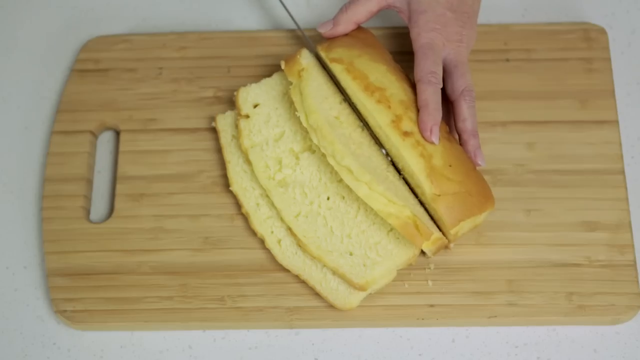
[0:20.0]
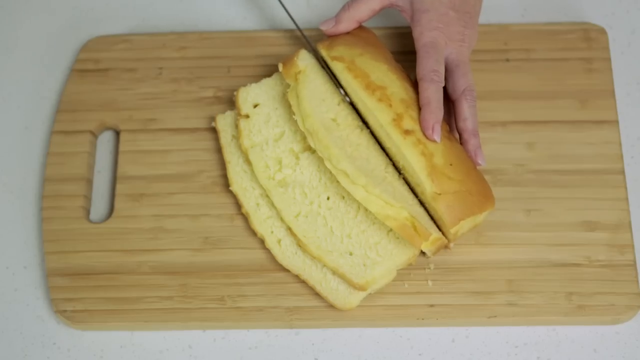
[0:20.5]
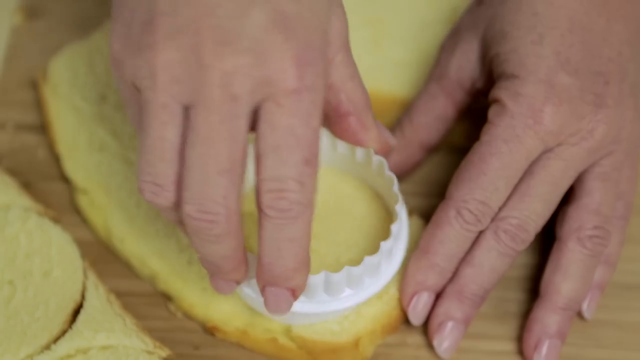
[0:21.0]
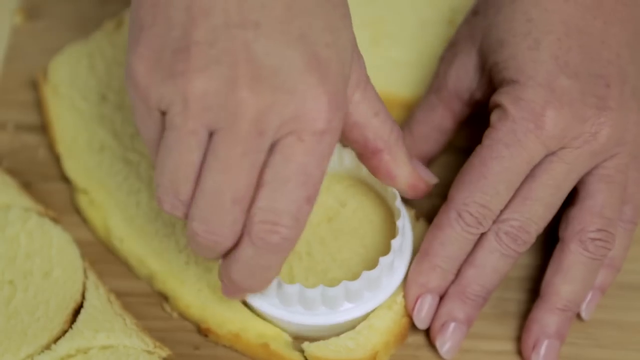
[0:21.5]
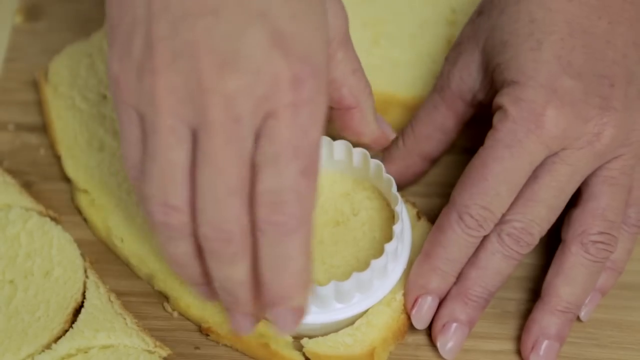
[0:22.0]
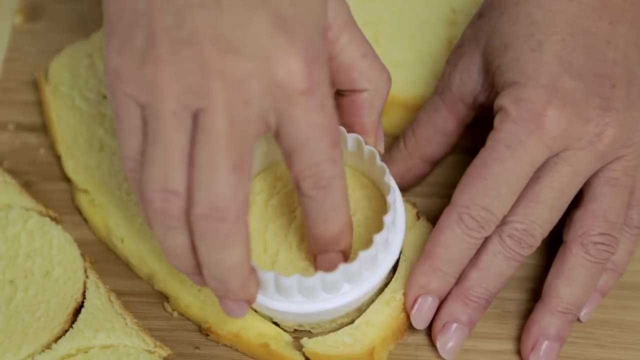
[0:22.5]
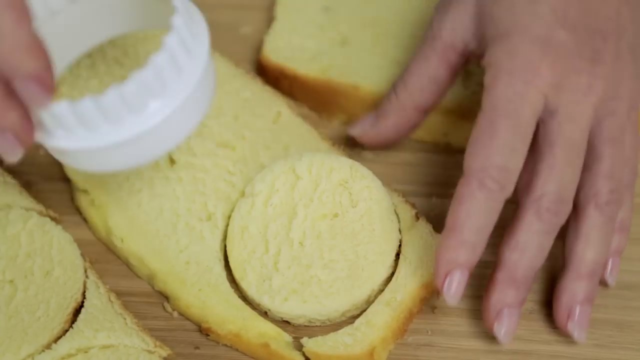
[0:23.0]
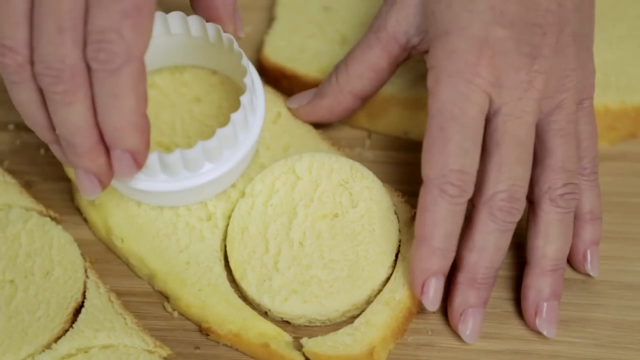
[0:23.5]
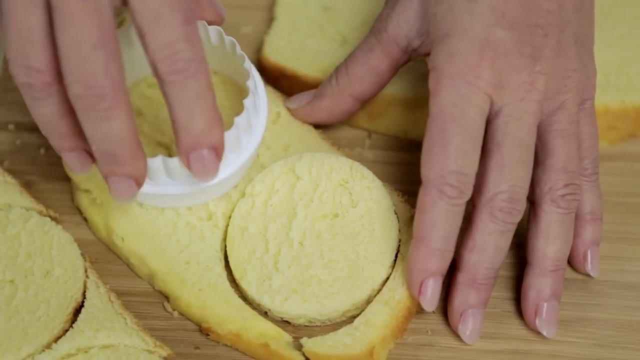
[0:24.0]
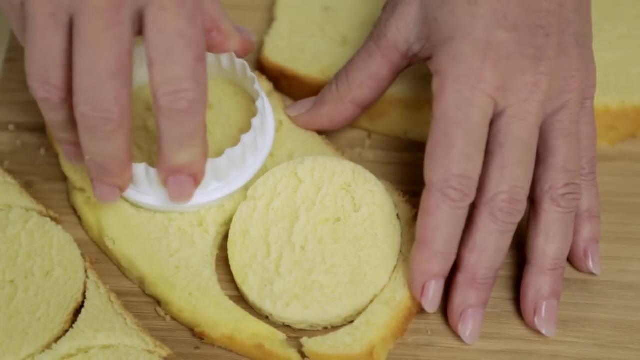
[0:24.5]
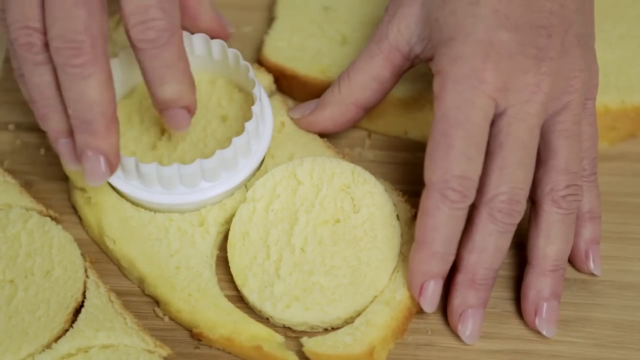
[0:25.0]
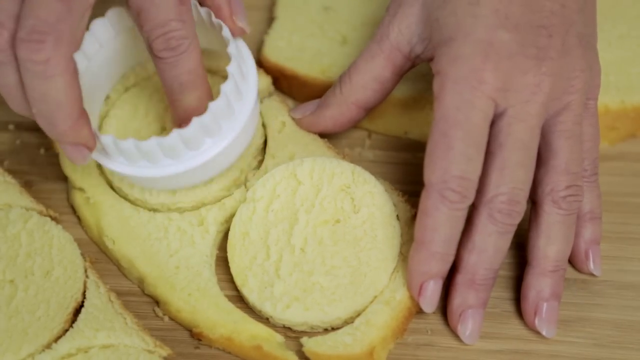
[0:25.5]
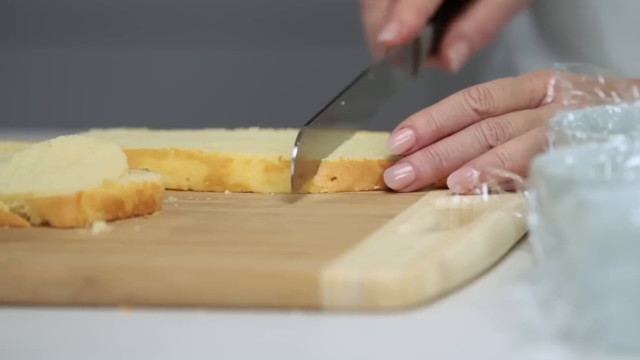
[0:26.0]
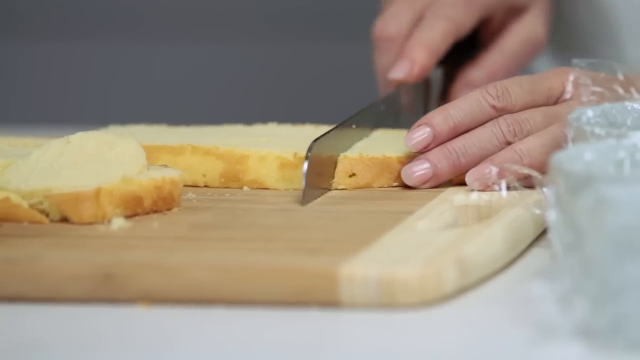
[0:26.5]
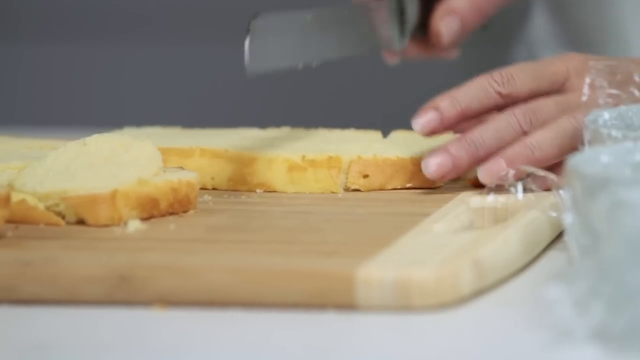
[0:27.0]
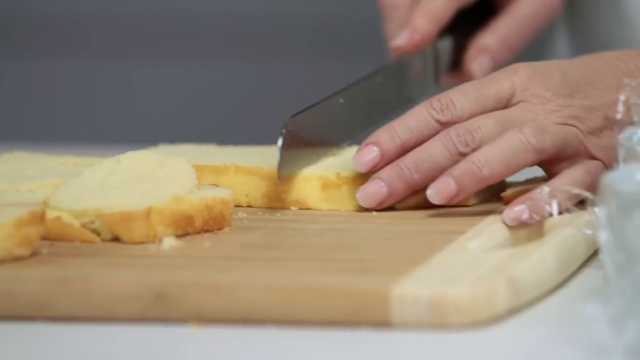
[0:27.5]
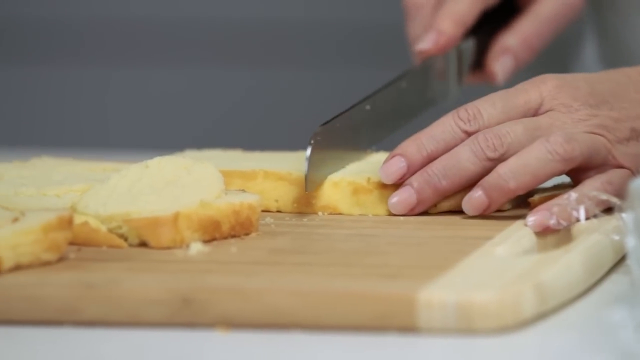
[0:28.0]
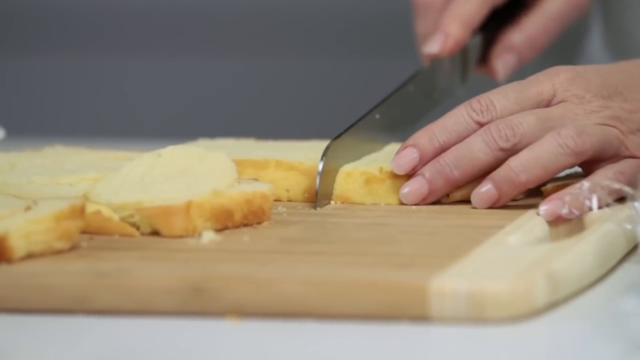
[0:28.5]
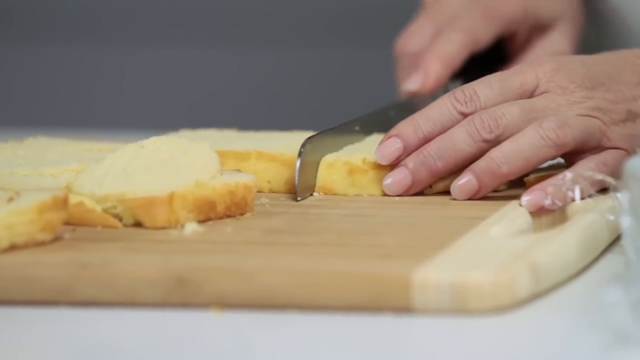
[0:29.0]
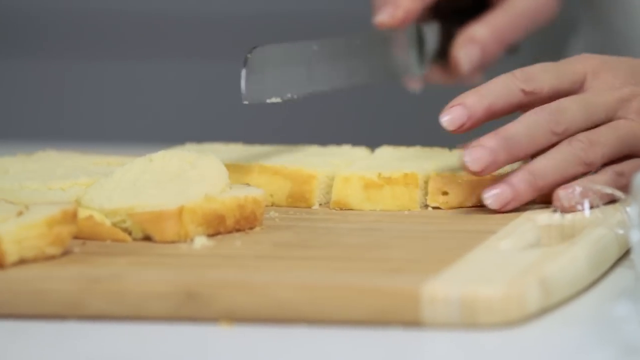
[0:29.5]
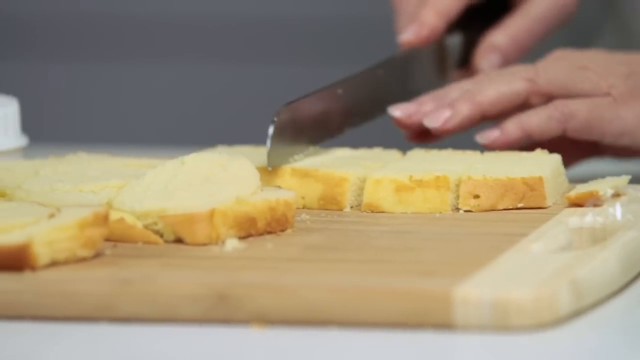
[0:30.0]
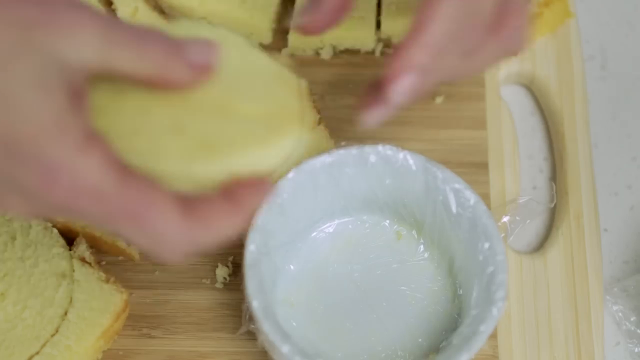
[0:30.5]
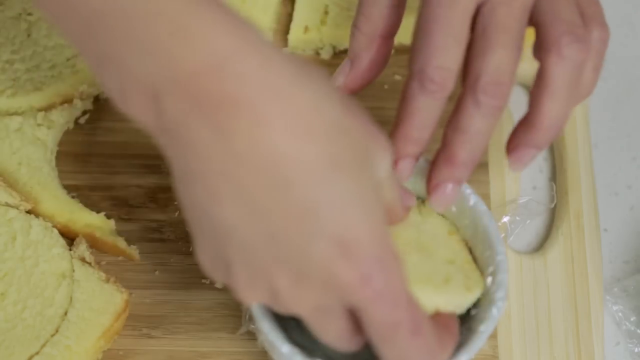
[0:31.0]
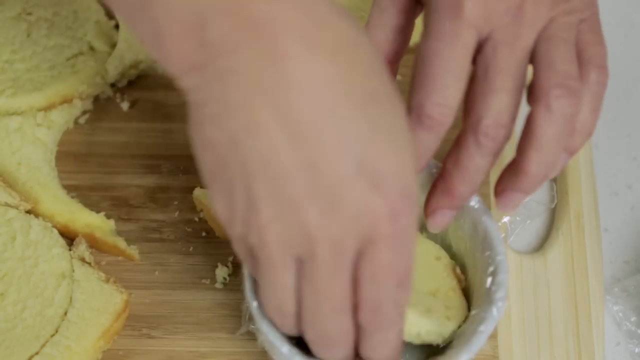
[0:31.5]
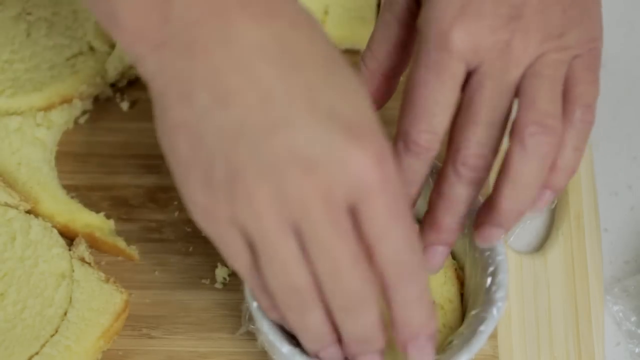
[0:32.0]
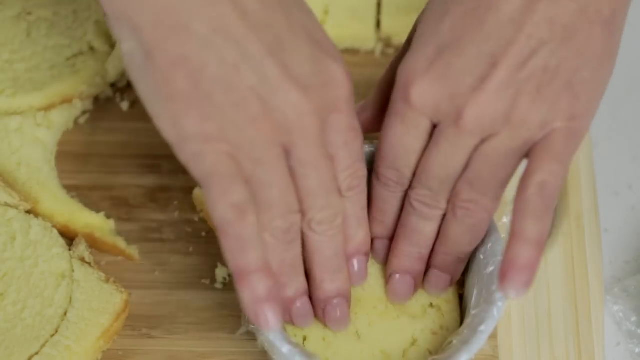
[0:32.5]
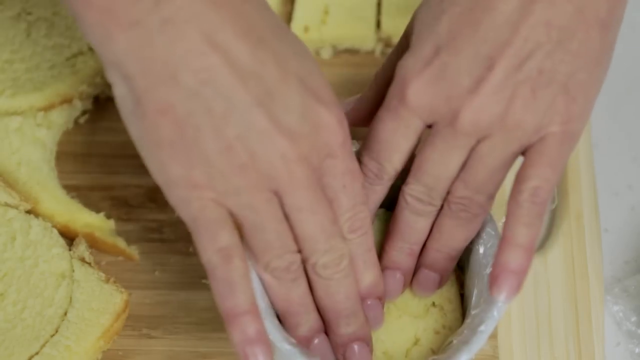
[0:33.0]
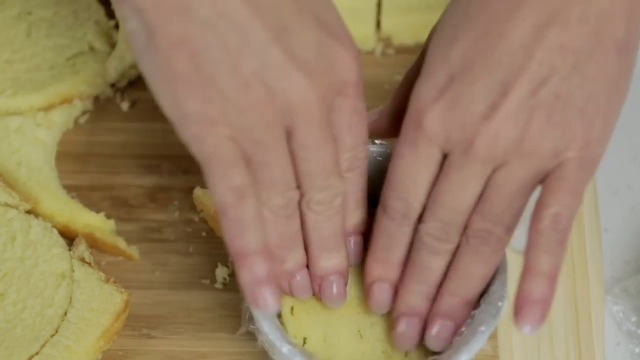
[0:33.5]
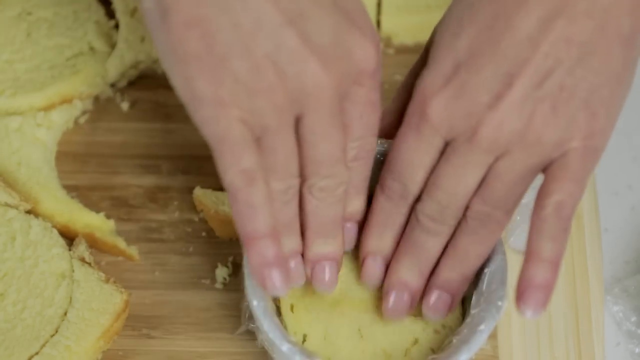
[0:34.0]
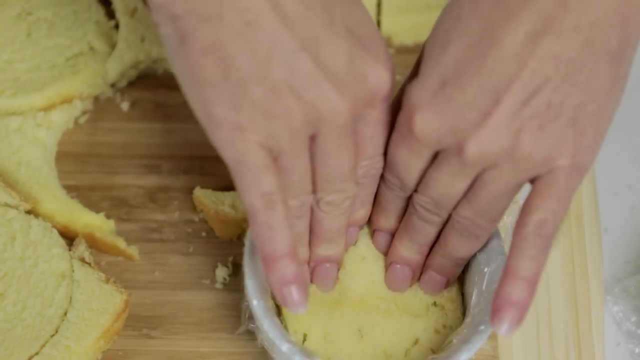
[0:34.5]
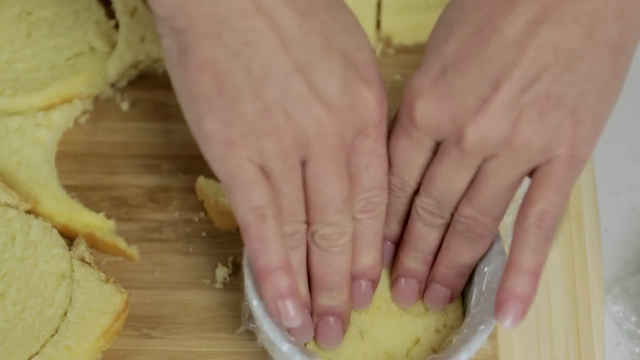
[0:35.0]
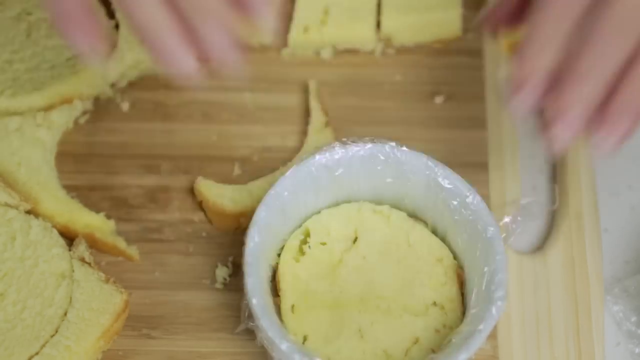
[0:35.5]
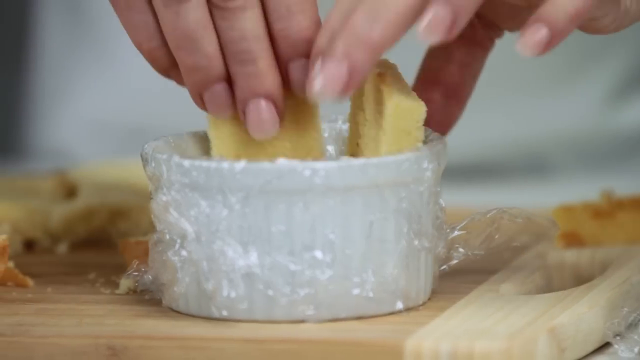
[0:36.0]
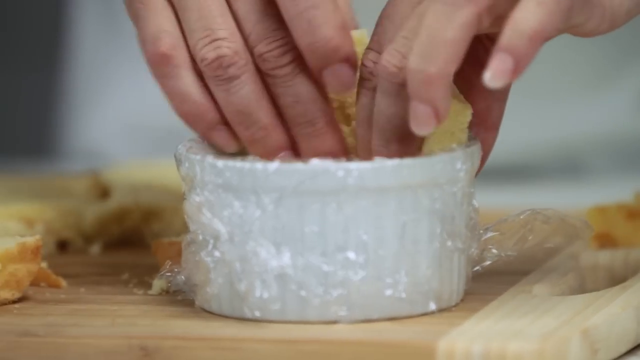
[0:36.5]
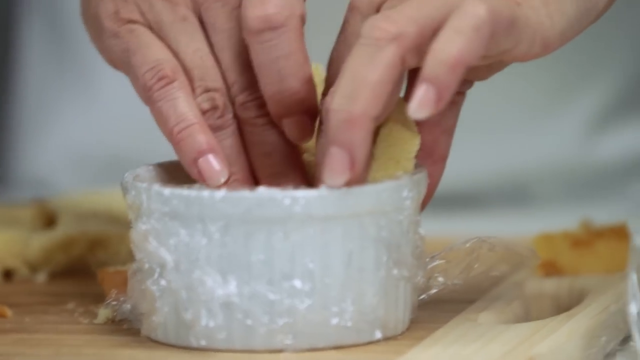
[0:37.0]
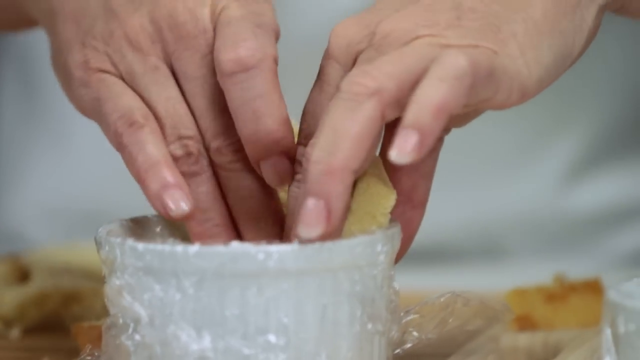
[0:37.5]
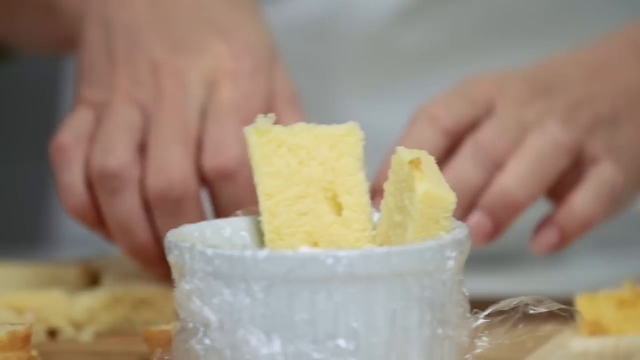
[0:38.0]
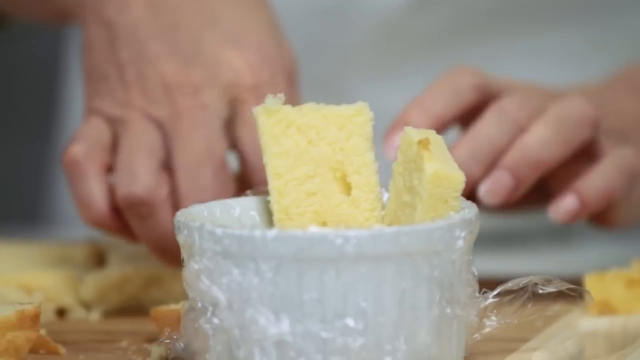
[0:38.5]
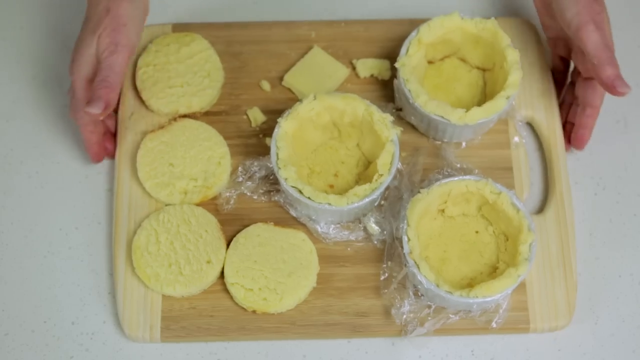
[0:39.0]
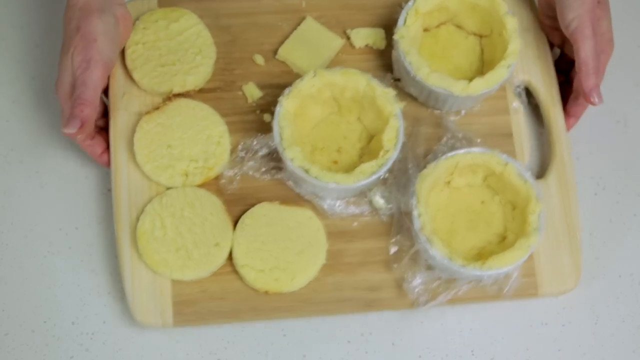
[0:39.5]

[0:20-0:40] A person holds a serrated knife in their right hand and a loaf of bread in their left, cutting slices of the bread on a wooden cutting board. They seem to have what looks like a white cookie cutter and seem to be making round shapes from the slices they cut. The person continues making more slices with the serrated knife. The circular piece of bread is placed inside a ramekin covered in saran wrap. Some slices are put in so they stick up, and more slices continue to be placed along the side of the ramekin. Three ramekins are visible with bread surrounding the inside. The person then lifts up the cutting board with both hands.